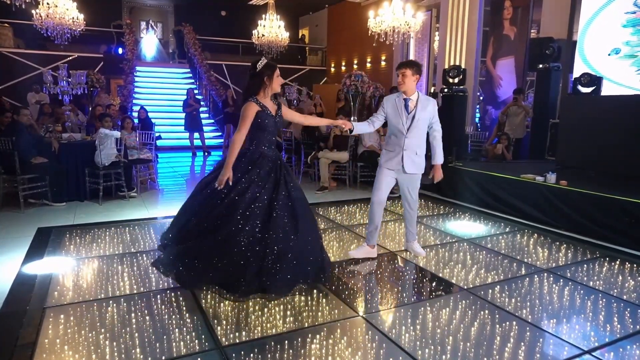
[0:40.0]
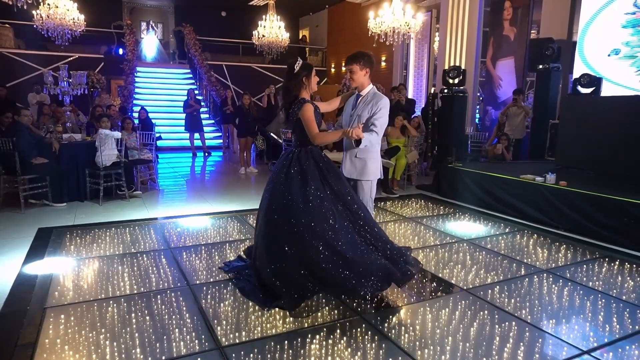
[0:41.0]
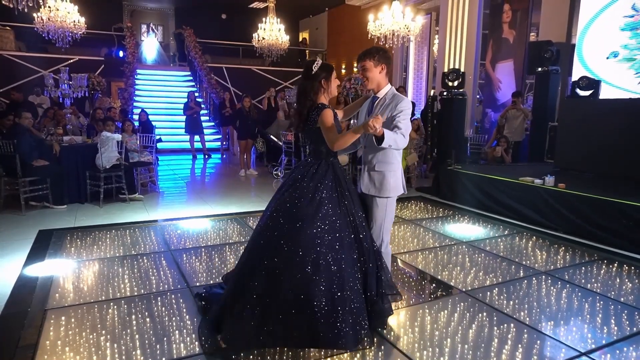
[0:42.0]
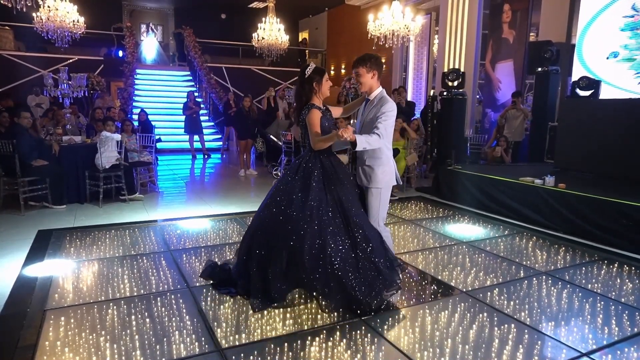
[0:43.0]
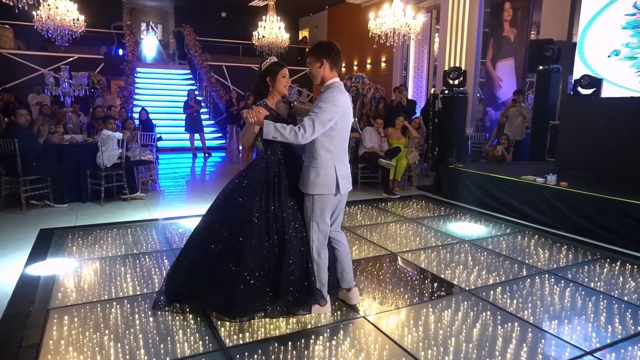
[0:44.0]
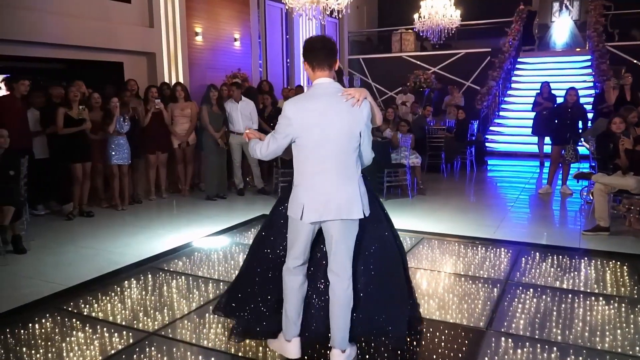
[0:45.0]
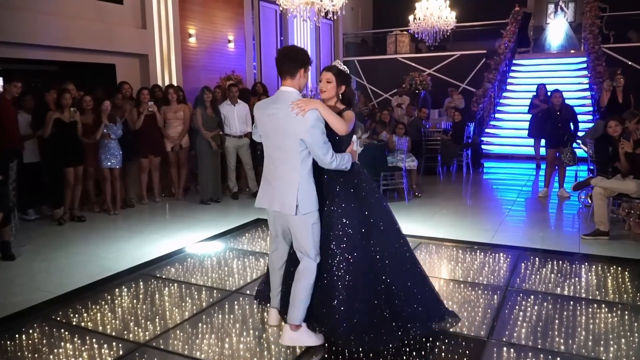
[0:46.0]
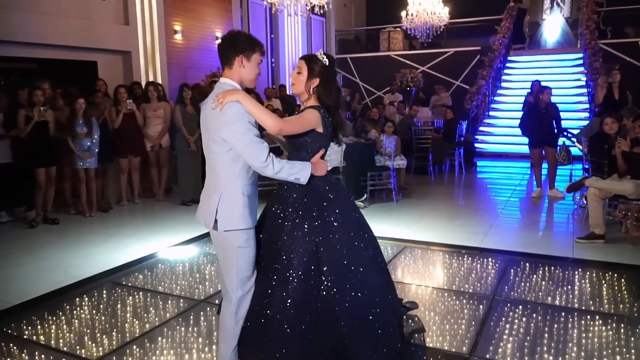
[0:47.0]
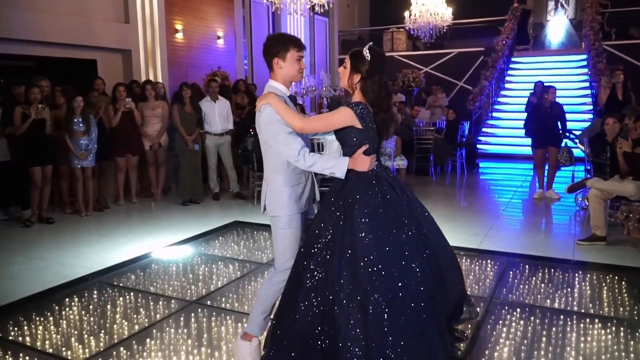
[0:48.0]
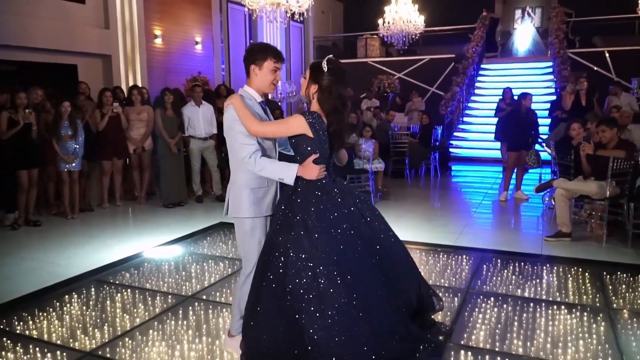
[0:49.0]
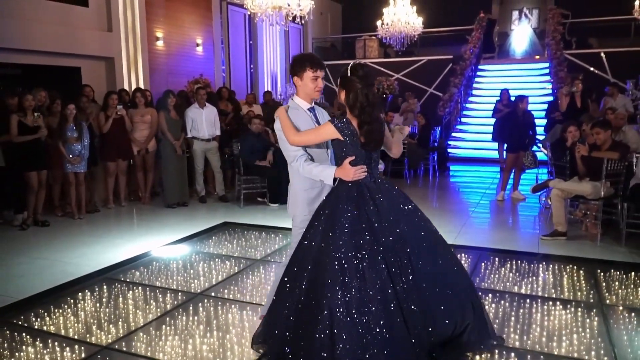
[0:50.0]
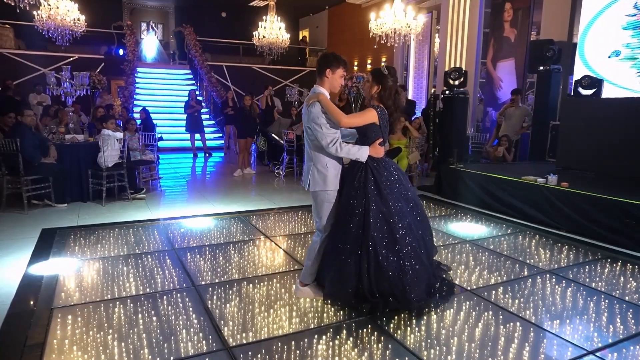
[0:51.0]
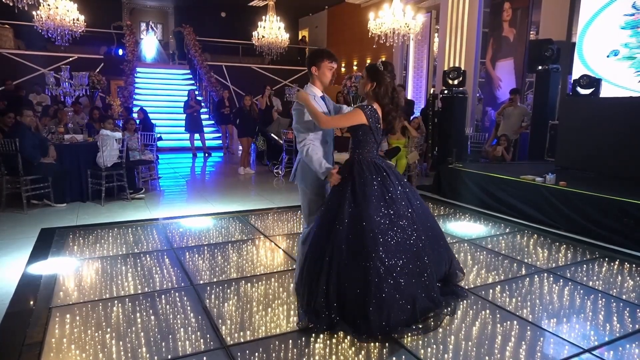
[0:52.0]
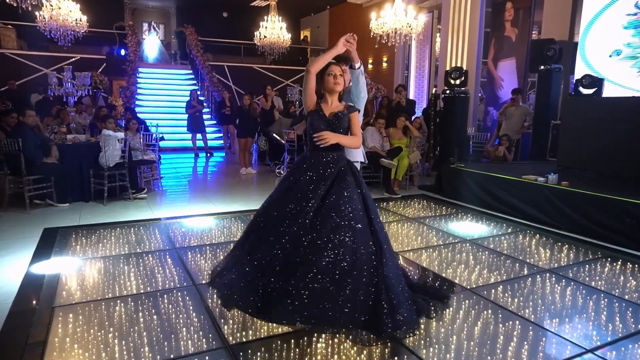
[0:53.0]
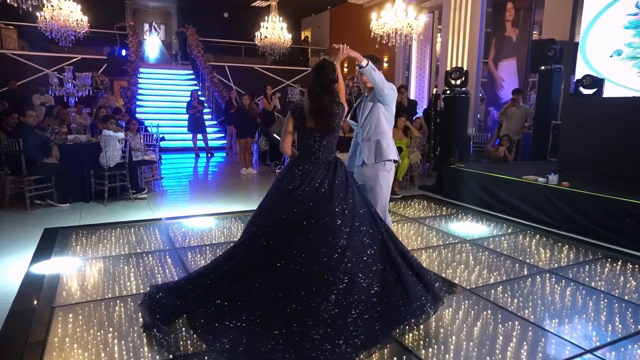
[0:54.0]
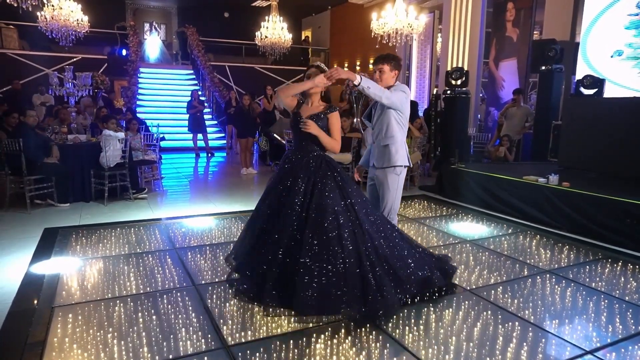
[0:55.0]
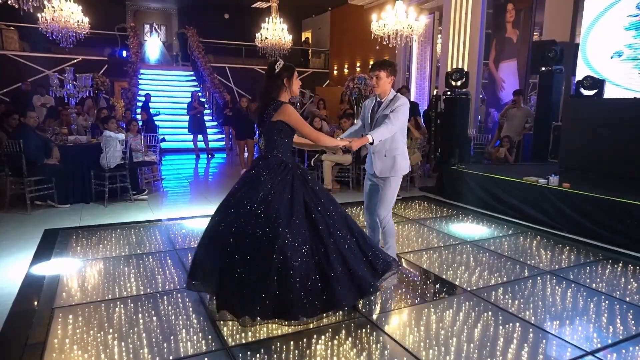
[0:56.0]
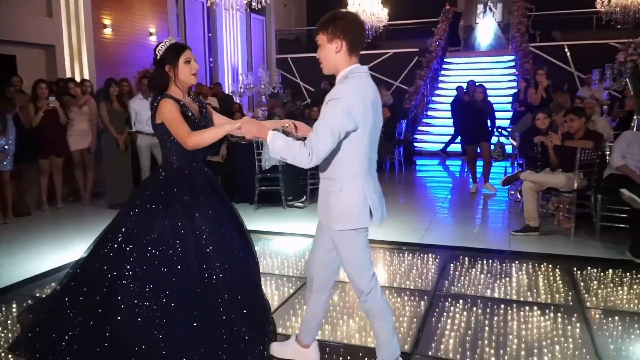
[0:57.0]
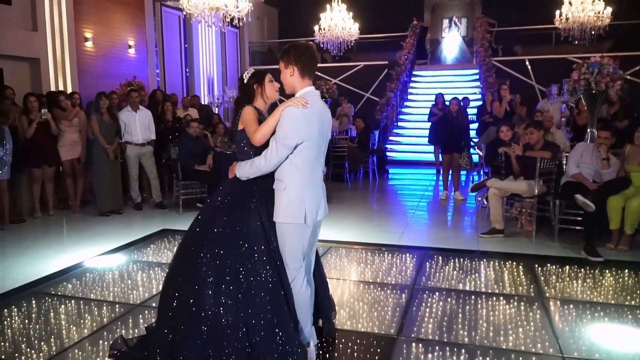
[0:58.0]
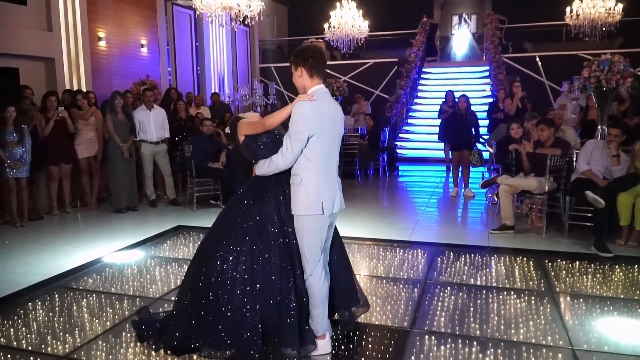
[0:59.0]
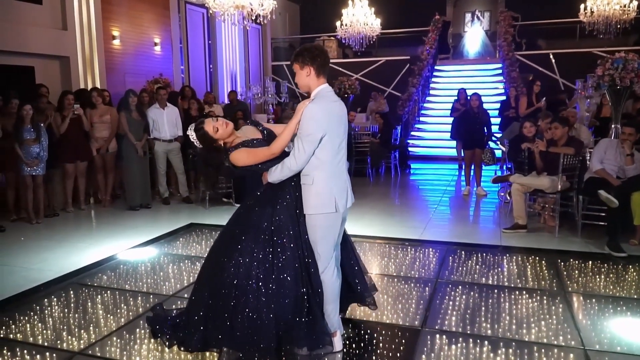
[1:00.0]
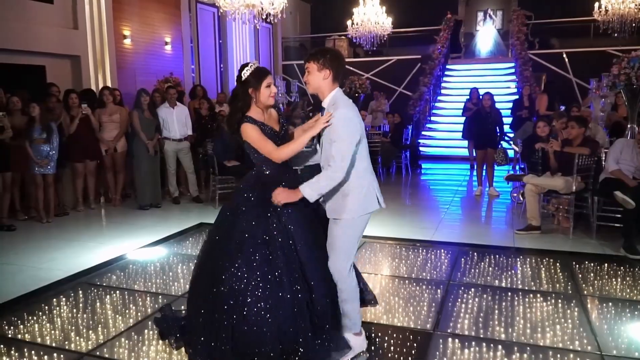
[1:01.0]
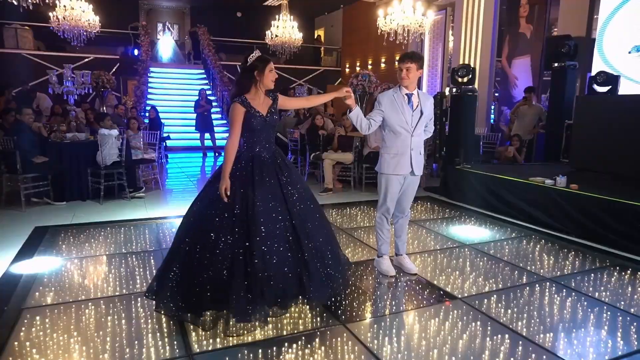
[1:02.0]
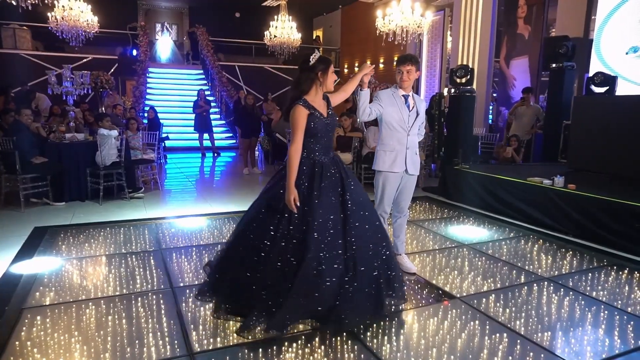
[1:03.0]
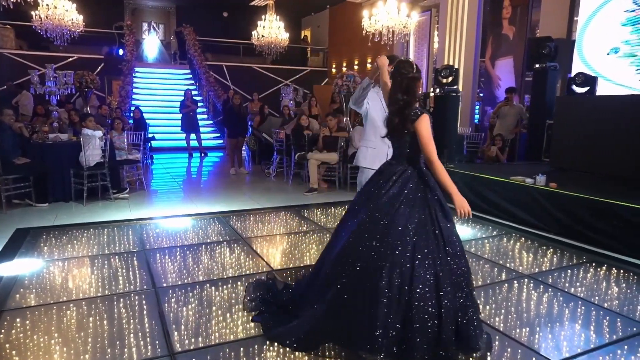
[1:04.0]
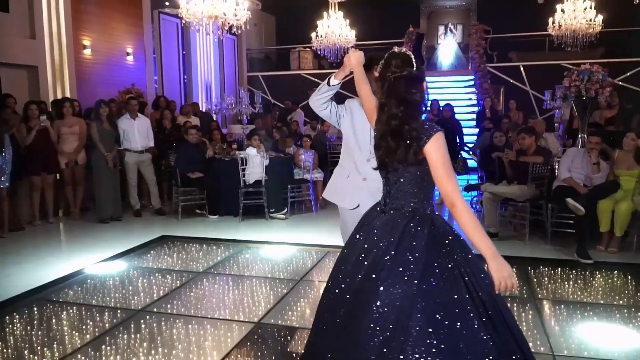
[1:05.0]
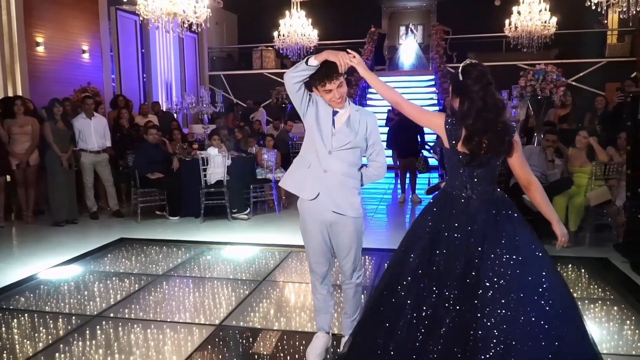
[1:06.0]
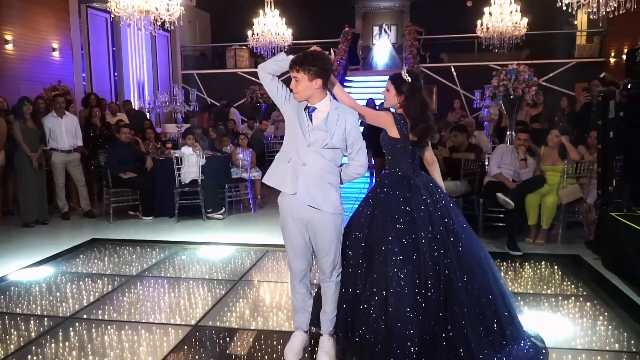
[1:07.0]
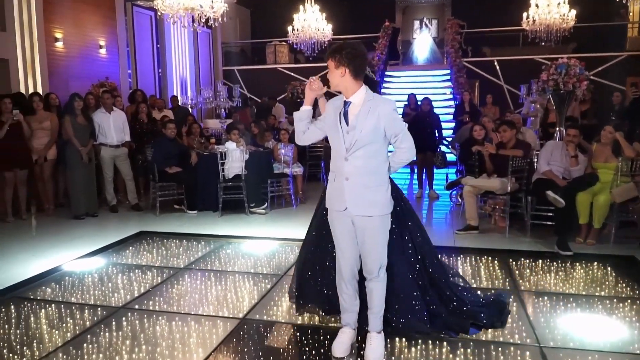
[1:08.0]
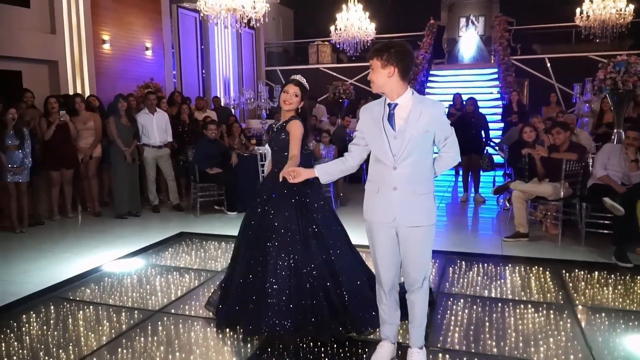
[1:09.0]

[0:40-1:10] The young couple dances on the stage in the middle of the room, speeding up from a very slow, methodical dance; it is probably some type of ceremonial dance. Over to the right there appears to be a stage with a large picture of possibly the girl who is dancing, so the occasion may be her birthday or possibly an engagement. Quite a few people fill the room, and they look like a close-knit group, probably family and friends of the couple.